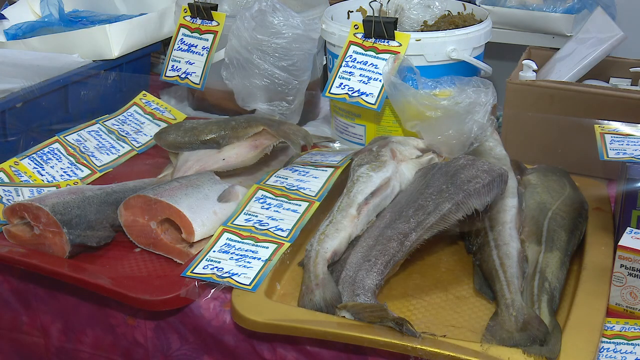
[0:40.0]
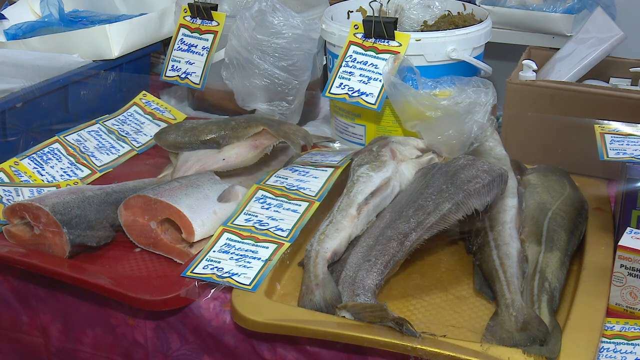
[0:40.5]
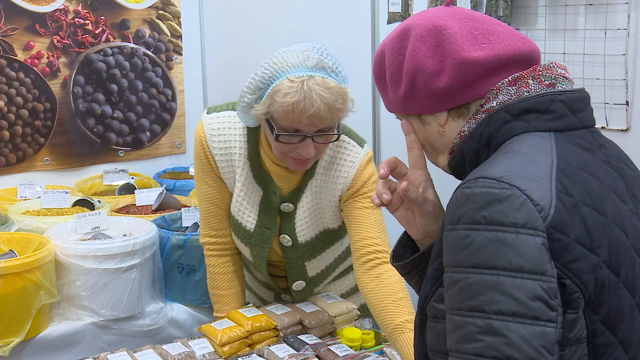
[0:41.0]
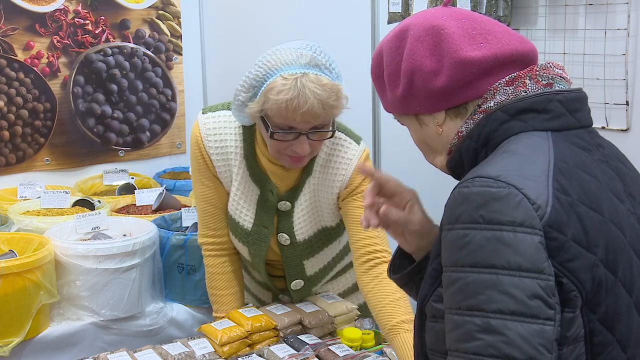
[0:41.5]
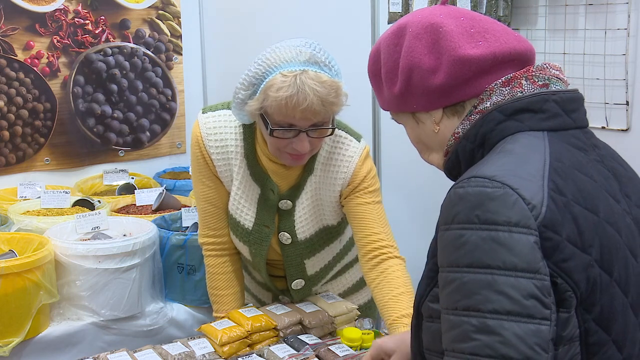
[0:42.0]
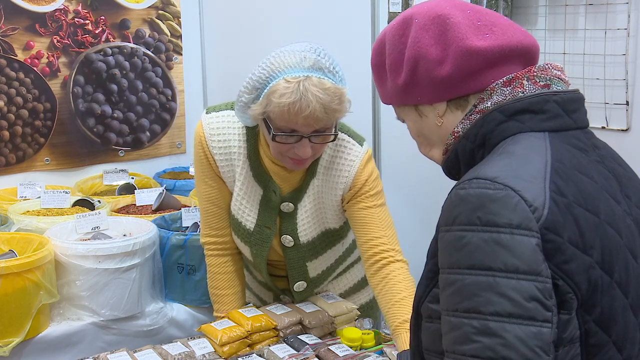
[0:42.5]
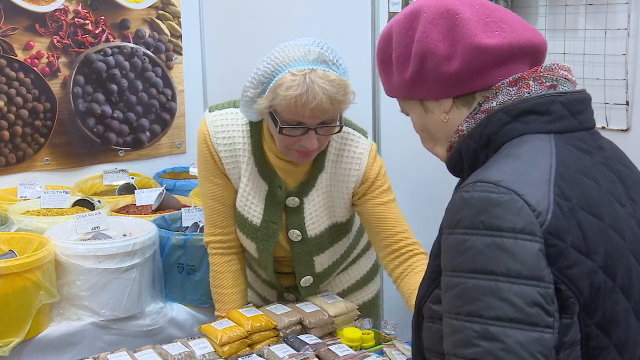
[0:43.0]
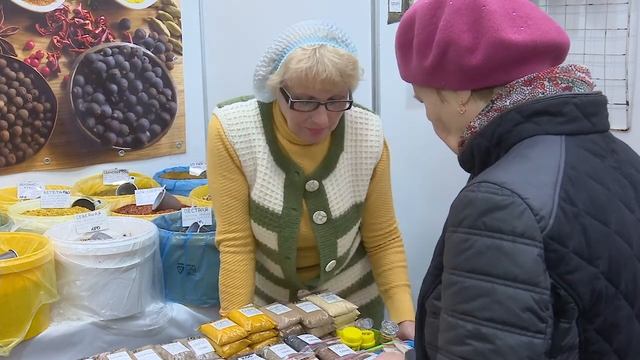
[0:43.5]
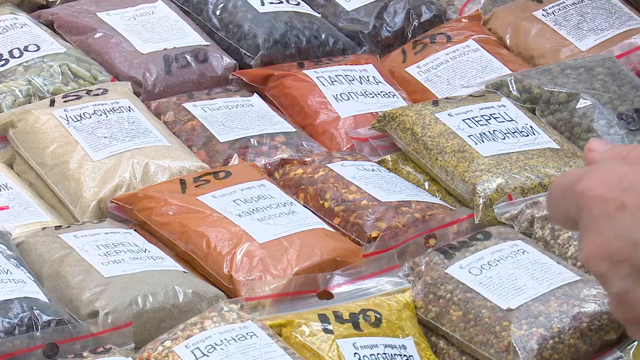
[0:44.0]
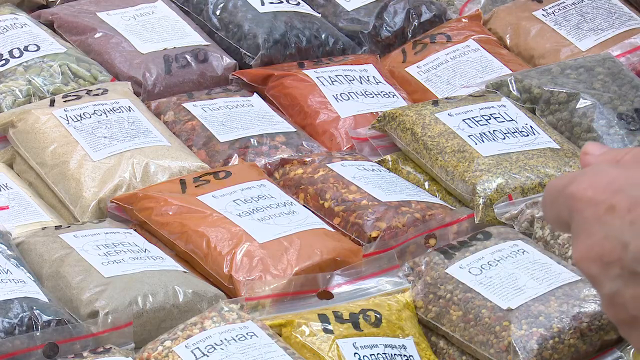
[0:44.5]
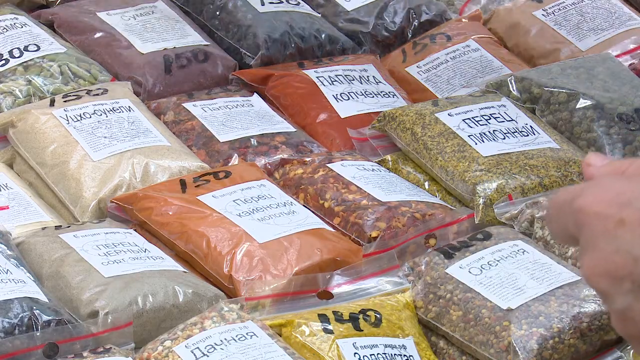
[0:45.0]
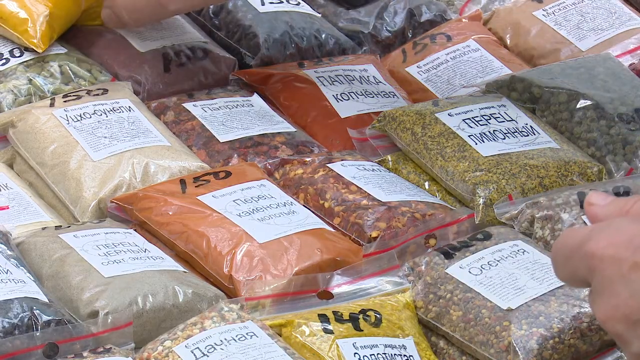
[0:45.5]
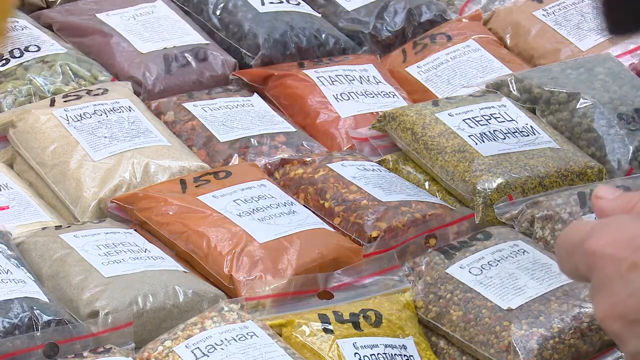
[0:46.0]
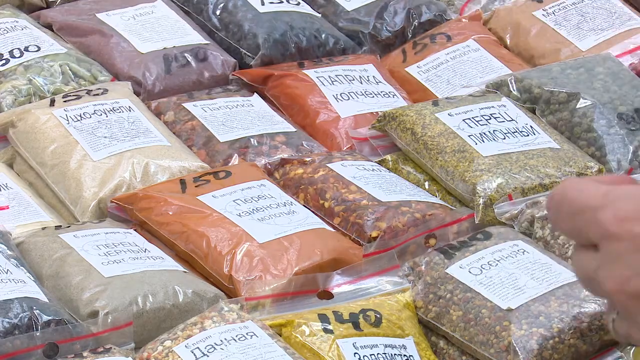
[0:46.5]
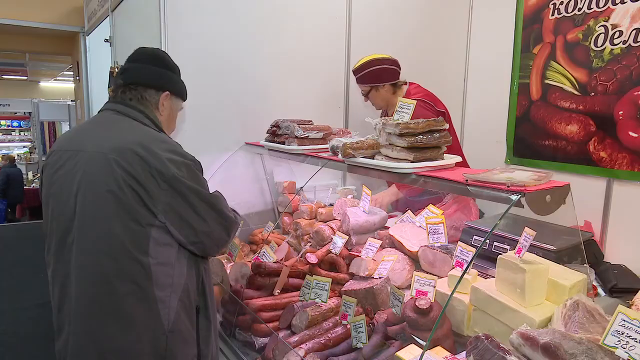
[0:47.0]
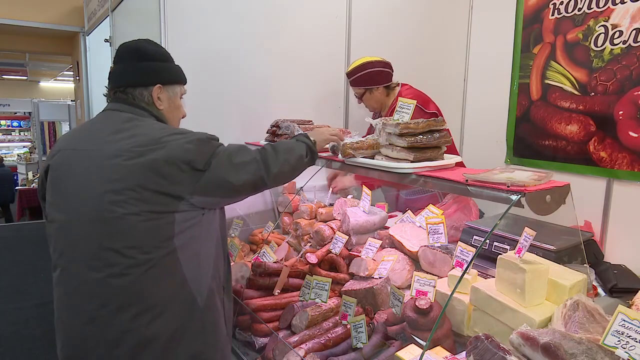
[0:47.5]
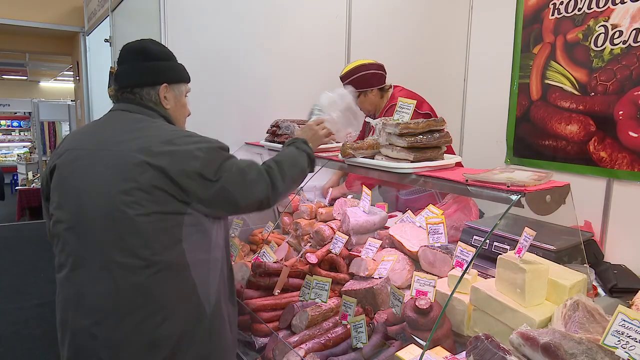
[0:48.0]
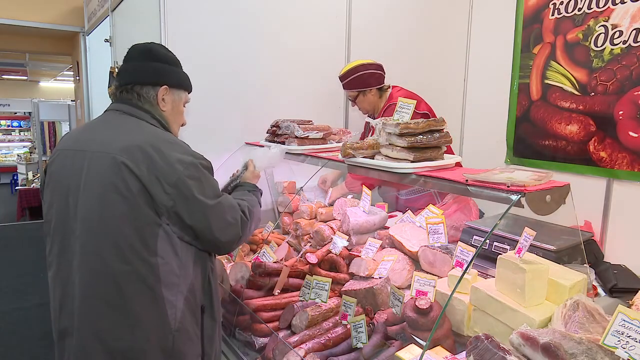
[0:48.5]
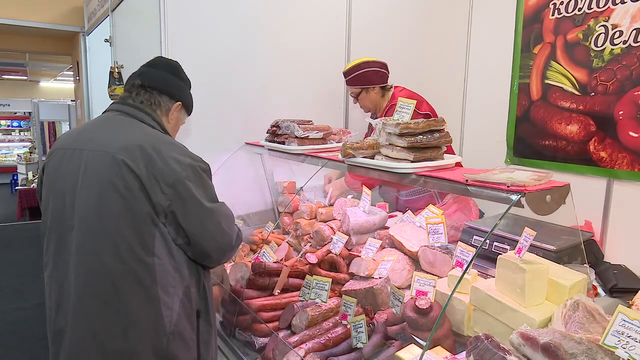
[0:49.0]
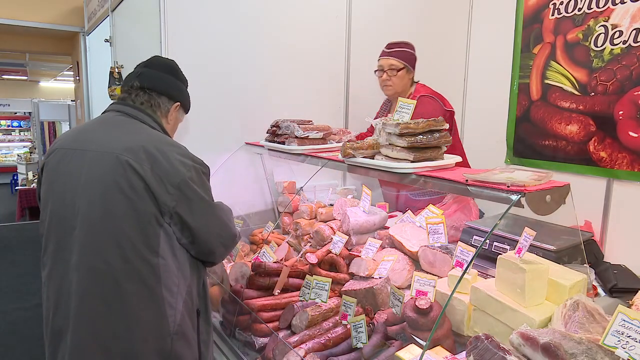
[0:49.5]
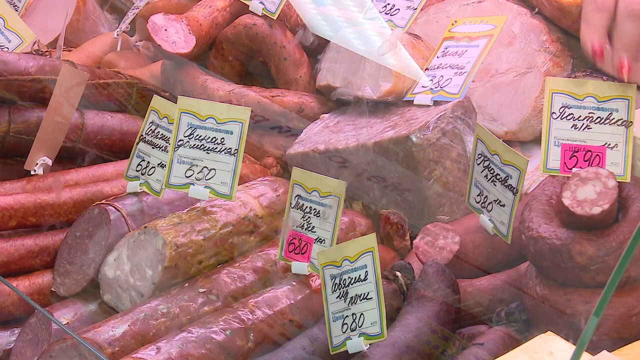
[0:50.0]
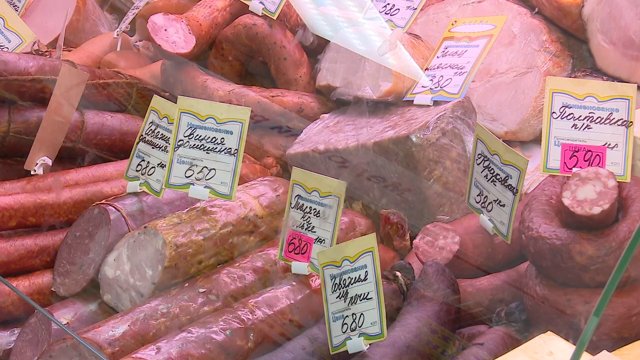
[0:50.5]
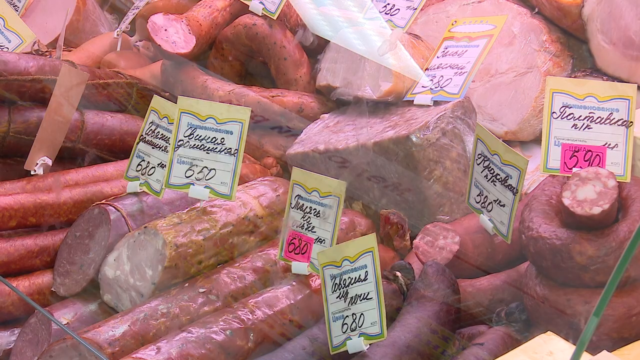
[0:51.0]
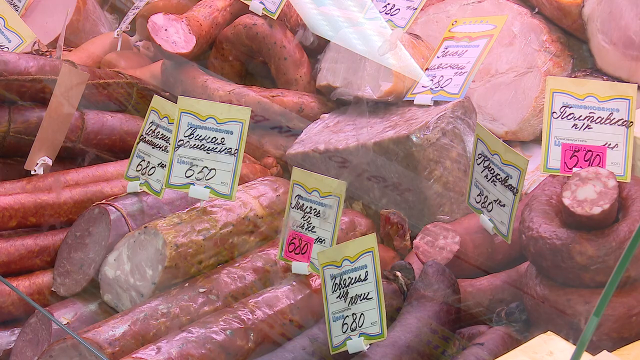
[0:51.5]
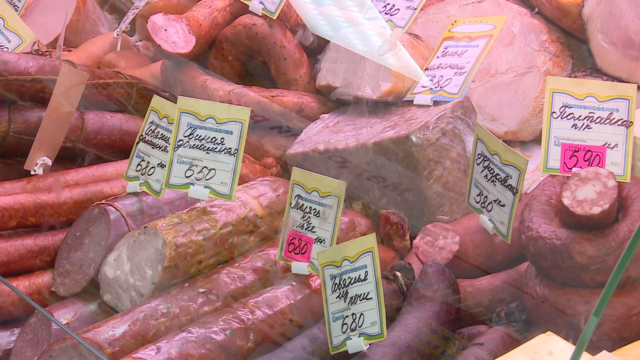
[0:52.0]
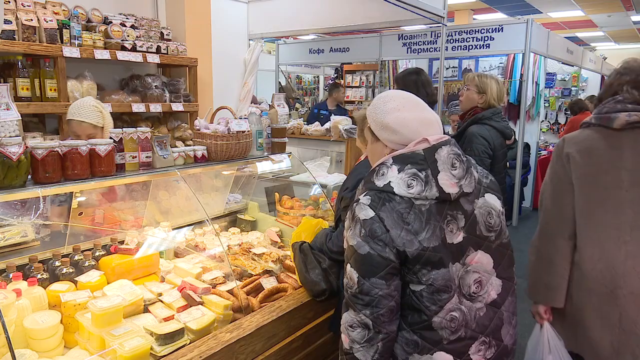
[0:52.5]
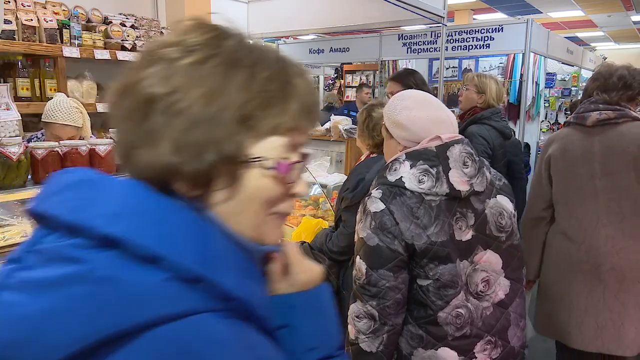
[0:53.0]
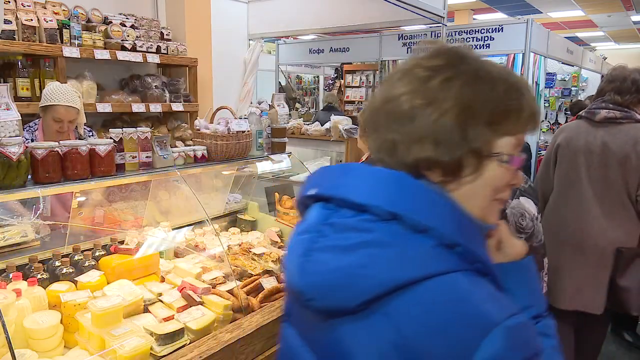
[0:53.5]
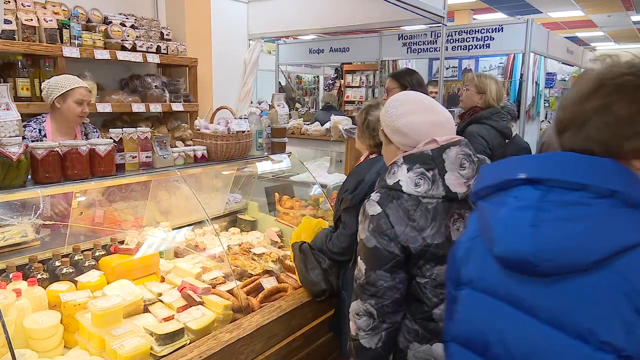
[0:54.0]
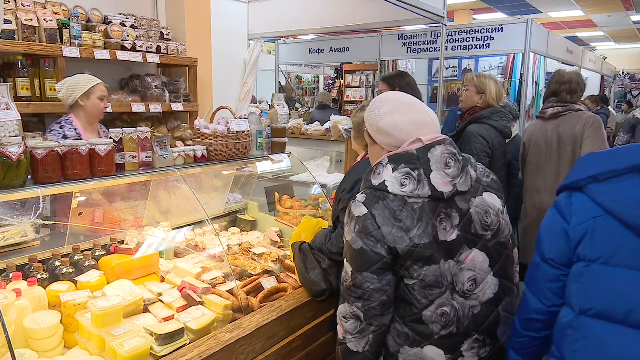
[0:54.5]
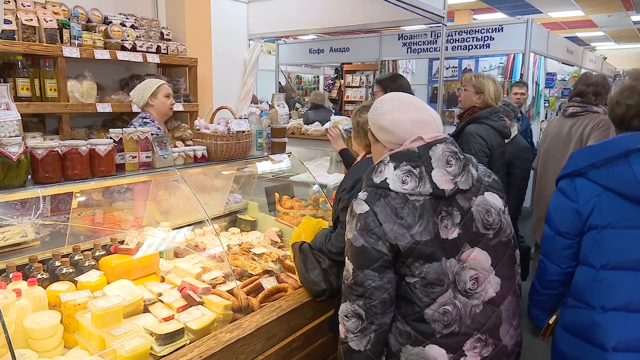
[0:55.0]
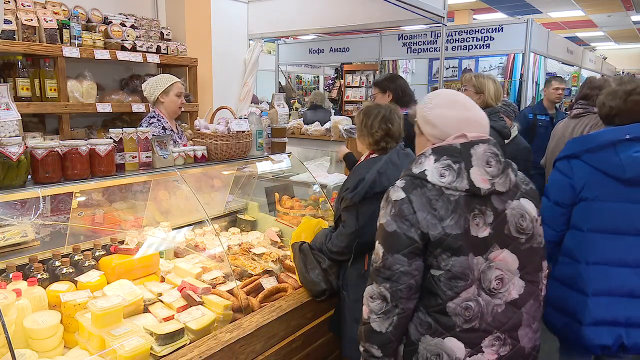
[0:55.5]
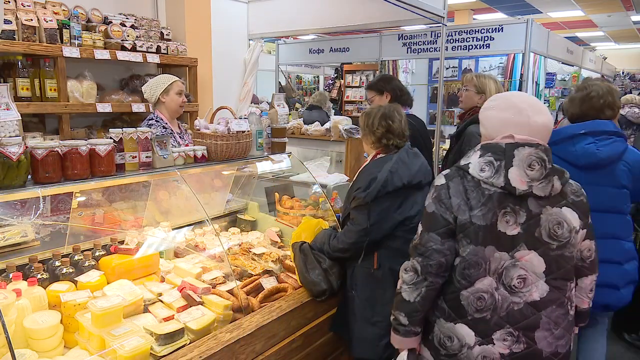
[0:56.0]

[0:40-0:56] From the right side there is a goldish-looking tray holding what looks like four strips of fish with the tails facing down and the heads cut off. Sticky notes with information run down the center, and on the left side another tray, a red one, holds three more, this time with the end where the head was removed facing down. More containers across the back hold various food items. The video cuts to a woman at the right edge in a pink hat and a black and gray coat. In front of her is a woman in a hairnet with blonde hair and black glasses, wearing a long-sleeve yellow shirt and a green and white vest; she bends over a little toward the camera, reaches down, grabs something in front of her, and pulls back up. Behind her are little plastic packets and some buckets of food, a picture of food is on the wall, and the back wall is light blue. The video cuts to a close-up of a bunch of bags of what looks like seeds, angling up from the left in four rows, with only three visible in the bottom row at the right corner, and a bit of a hand coming in from the right side. It then cuts to a counter with a big plastic cover over all kinds of meats and cheese; the man from earlier in the black toboggan is on the right side, and behind the counter is a woman in a red shirt and a red and yellow hat. Next comes a close-up of all the different kinds of meats, and then the video cuts back to the three women standing in front of one area, with people walking behind them on the right side.